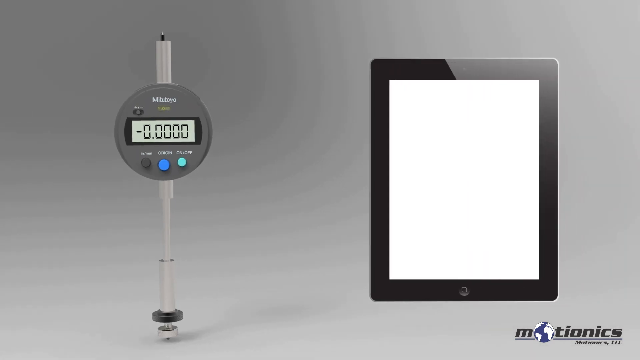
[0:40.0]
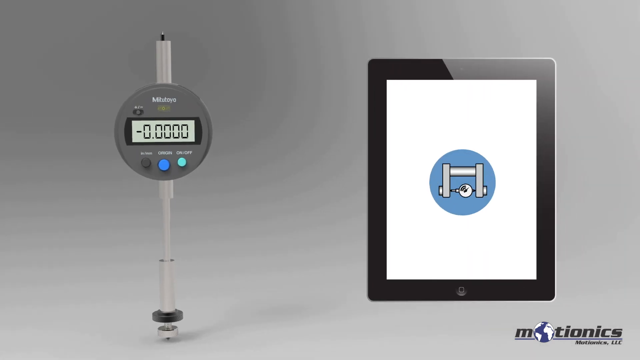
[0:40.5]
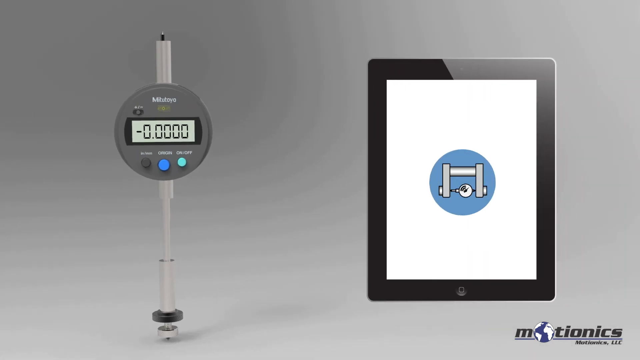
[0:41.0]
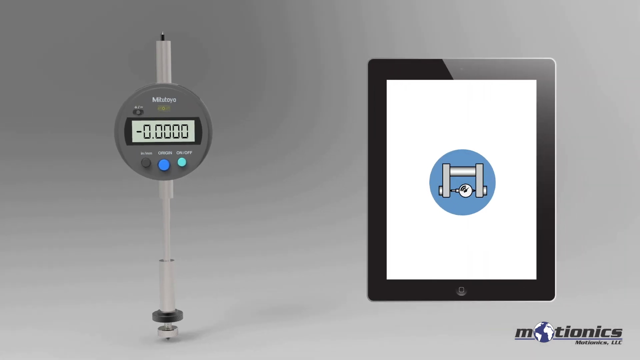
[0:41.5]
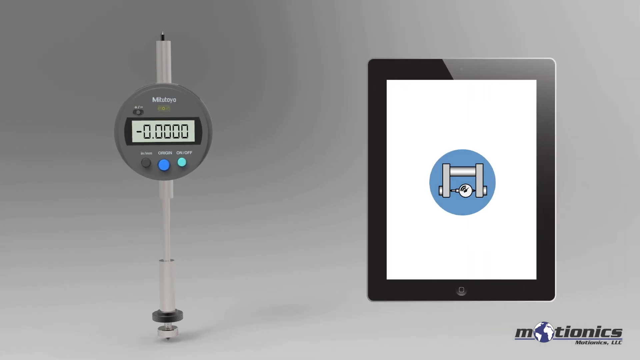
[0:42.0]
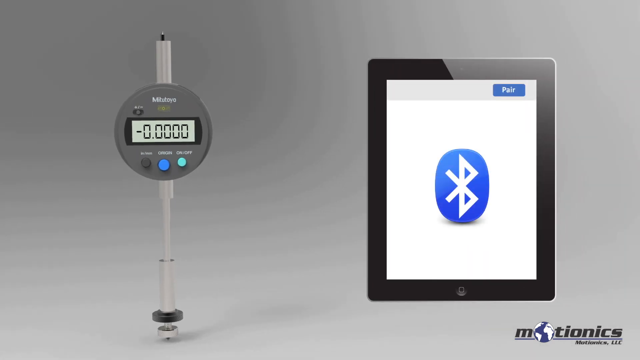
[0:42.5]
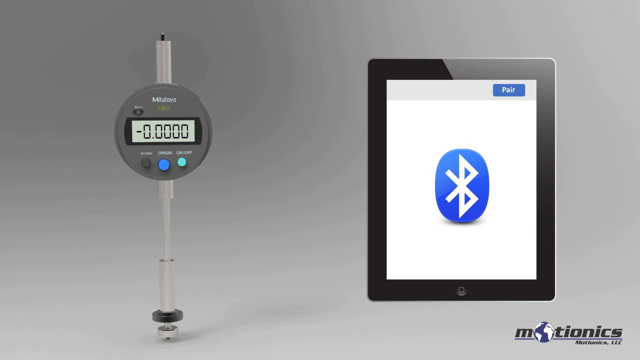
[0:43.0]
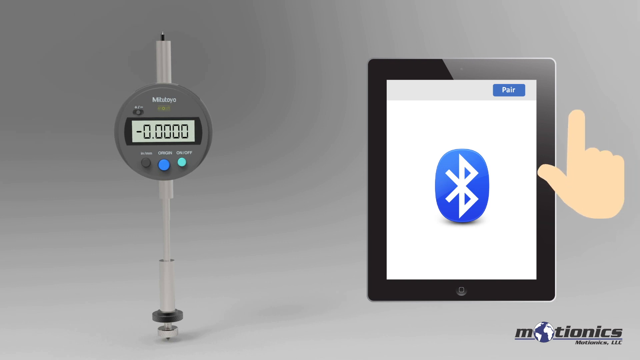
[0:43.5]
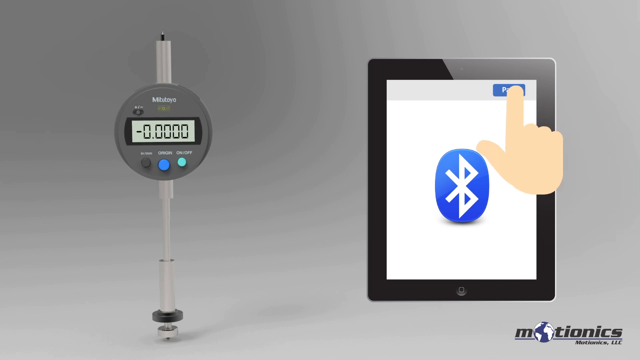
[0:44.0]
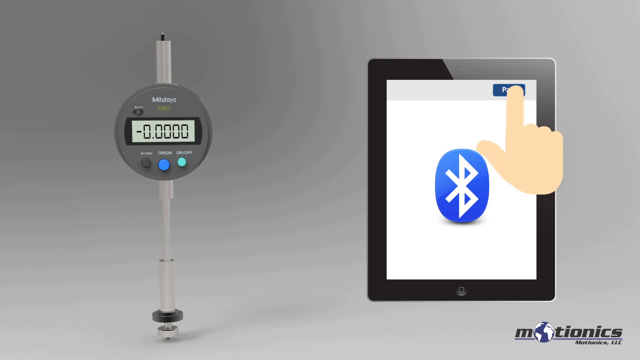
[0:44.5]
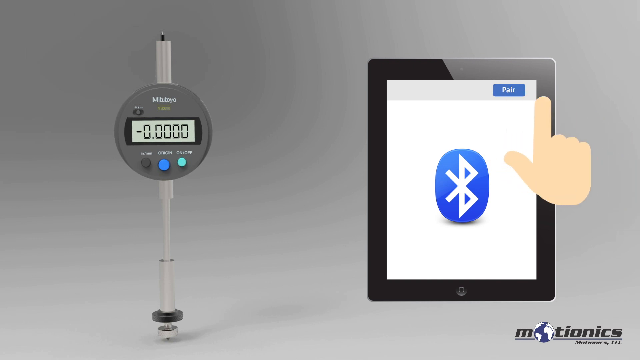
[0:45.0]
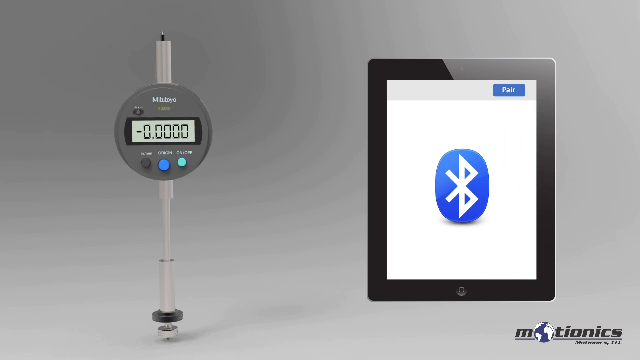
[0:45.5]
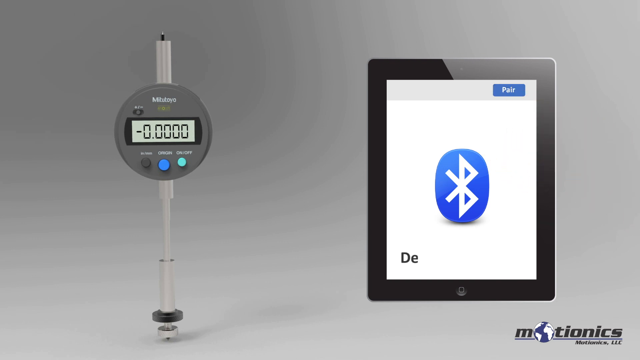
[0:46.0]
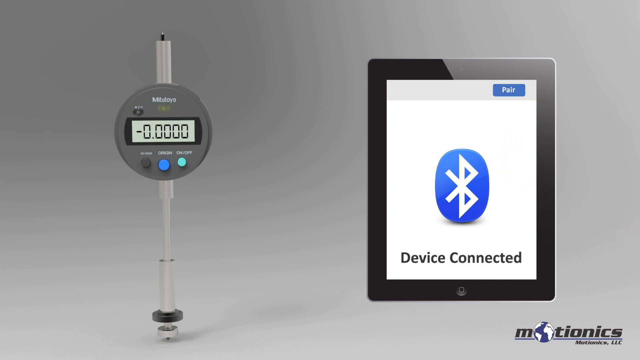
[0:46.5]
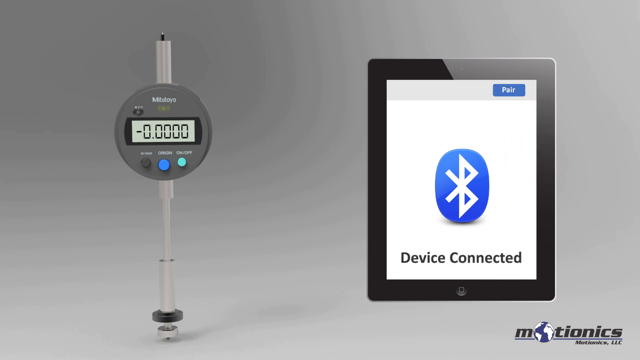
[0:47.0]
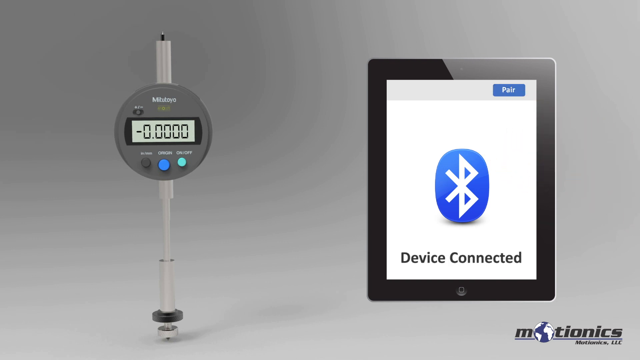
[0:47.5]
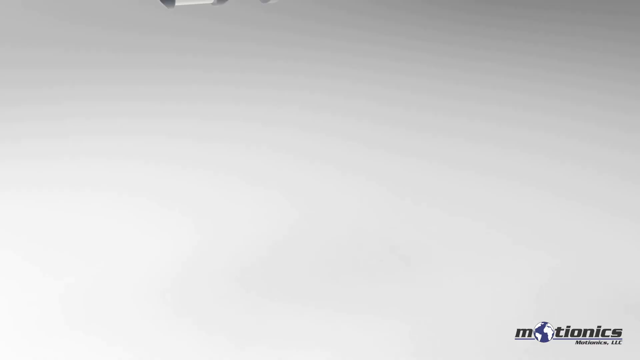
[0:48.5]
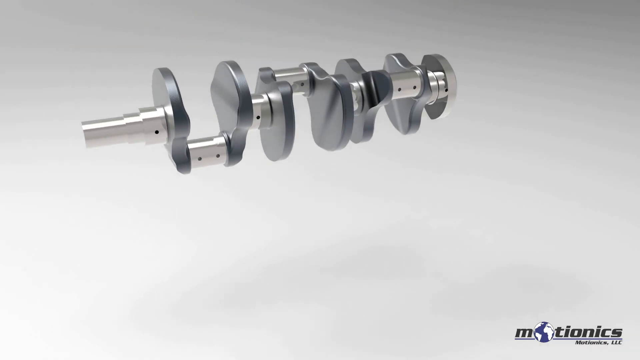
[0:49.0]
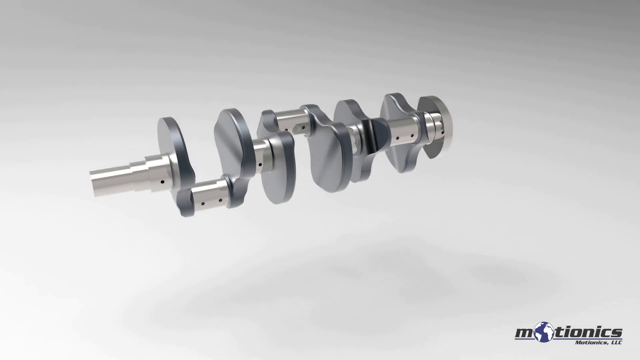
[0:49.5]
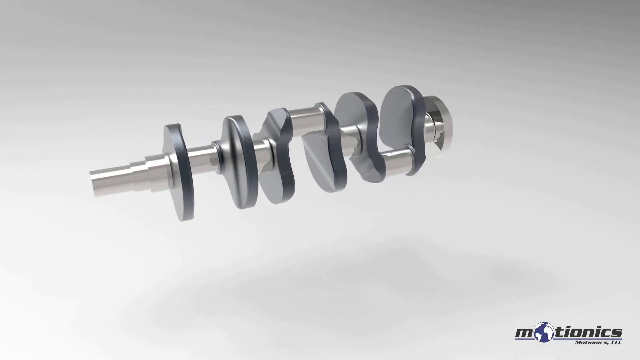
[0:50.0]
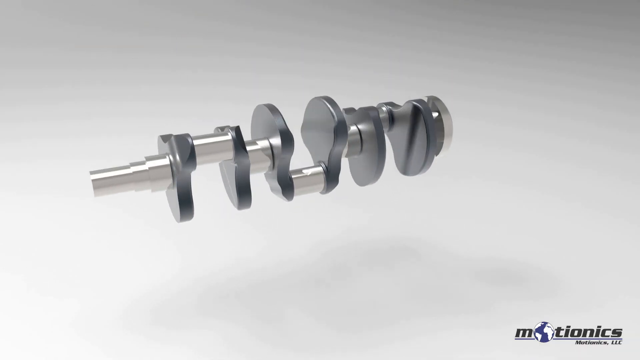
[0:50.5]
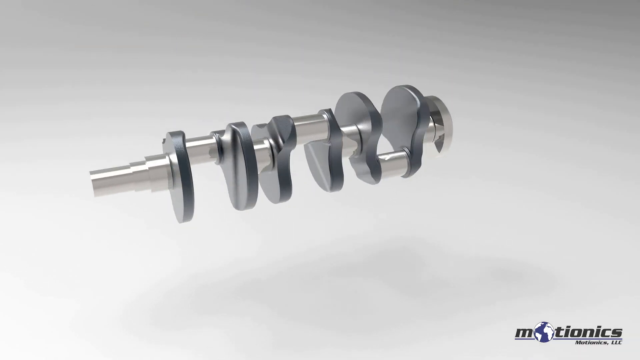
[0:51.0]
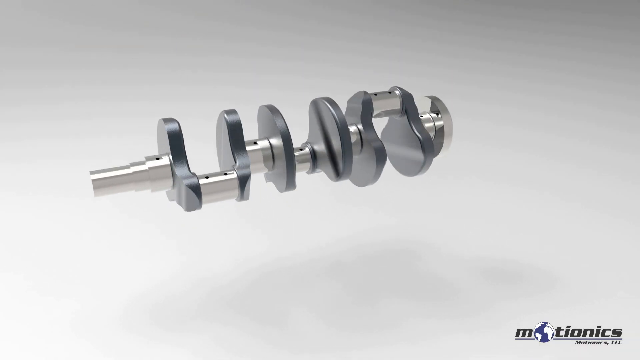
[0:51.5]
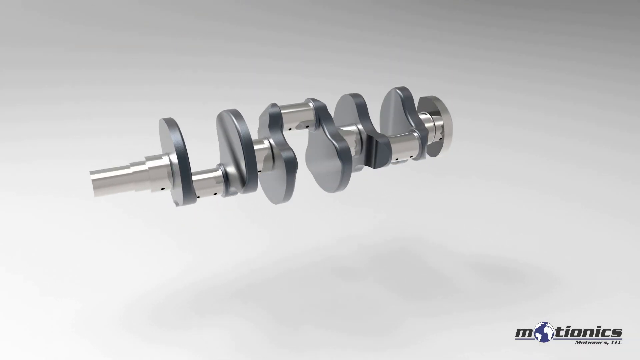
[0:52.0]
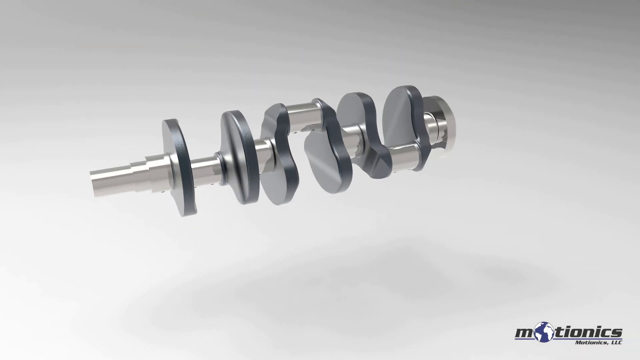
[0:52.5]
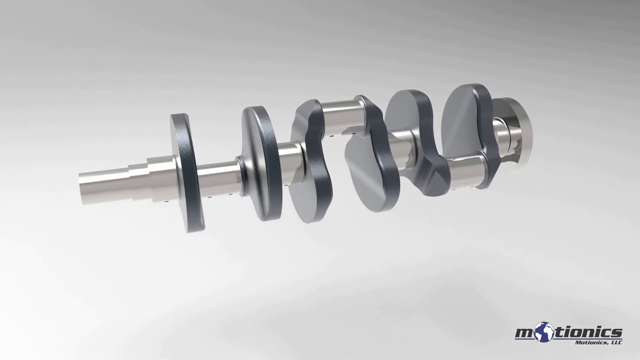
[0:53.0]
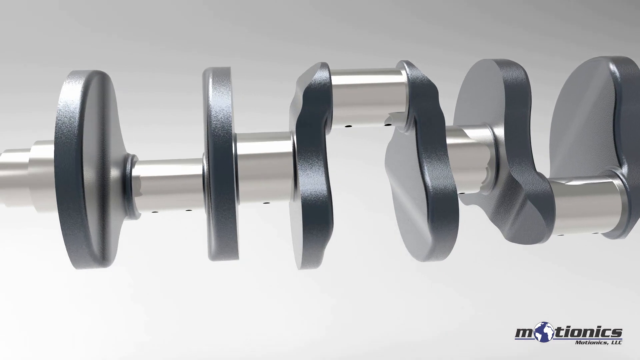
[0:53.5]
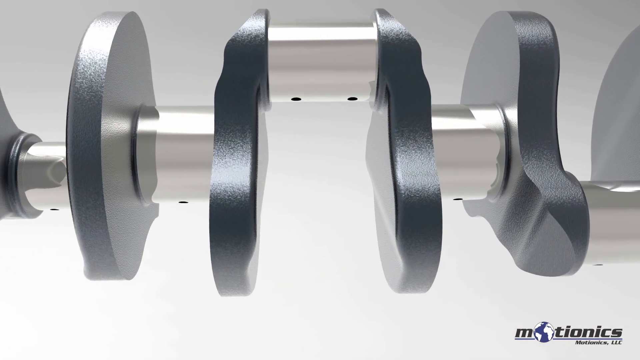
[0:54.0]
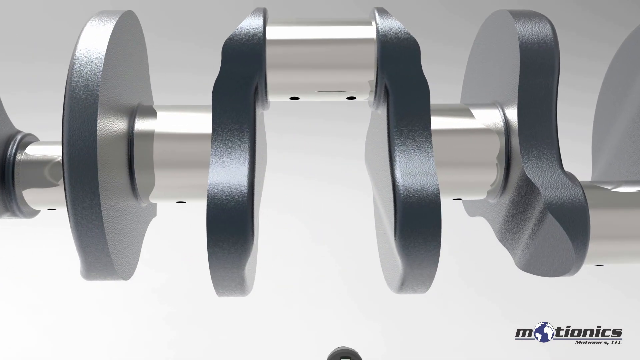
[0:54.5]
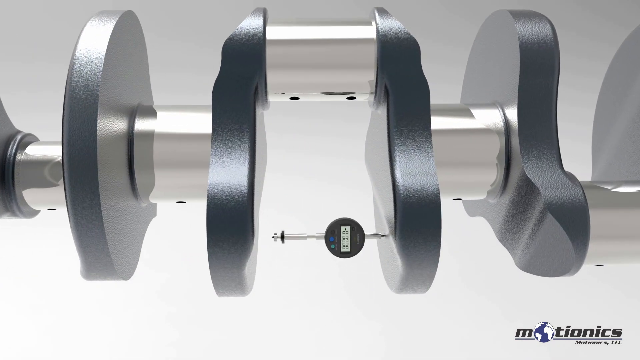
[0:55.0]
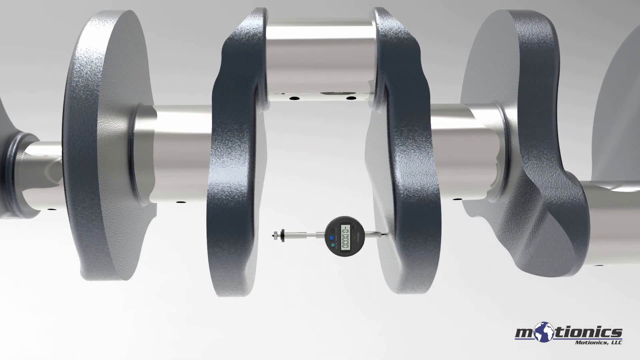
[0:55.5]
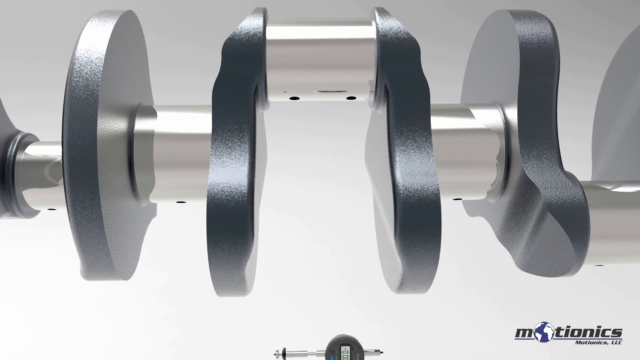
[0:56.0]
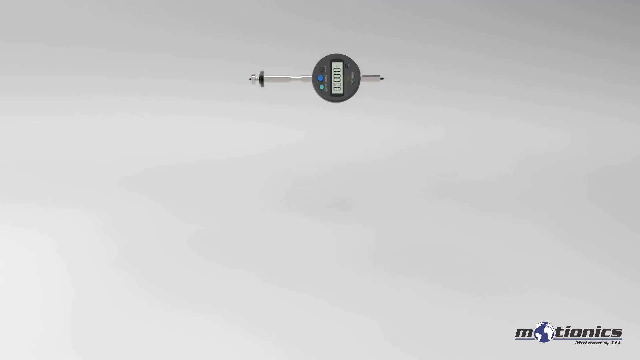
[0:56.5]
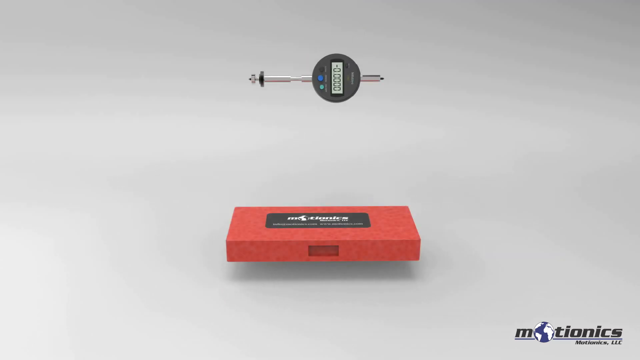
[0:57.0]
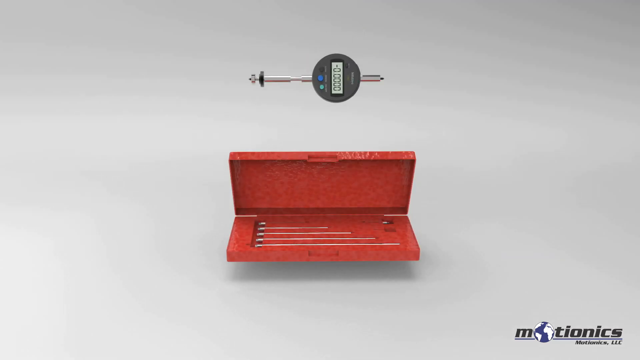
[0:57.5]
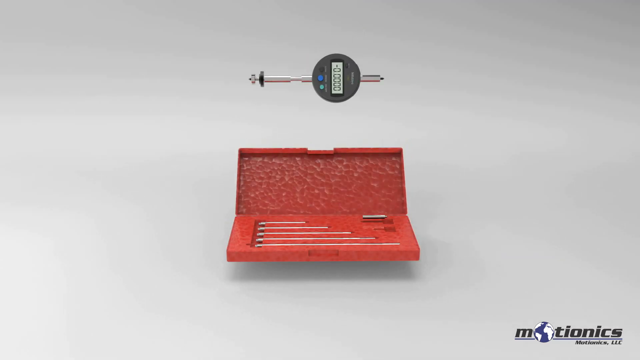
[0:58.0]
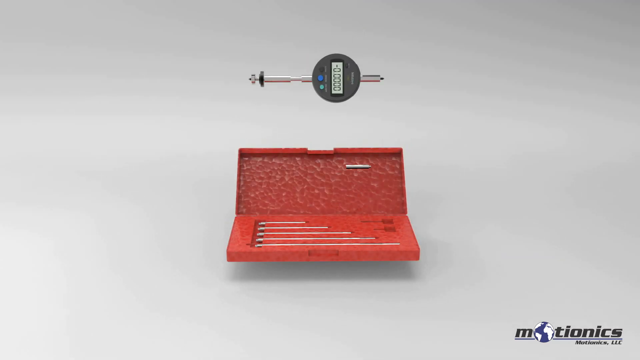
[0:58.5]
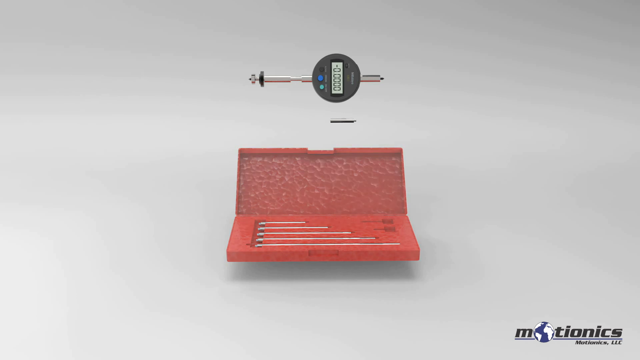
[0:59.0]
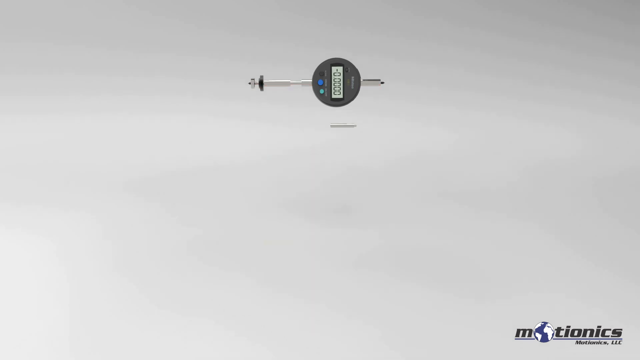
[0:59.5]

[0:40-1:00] On the picture of the tablet, a blue circle begins in the middle and grows. Inside it is a picture of a silver device with two lines on the right and left, a bar going across, and a circle toward the bottom, looking like it is screwed in on the sides. That disappears, and a Bluetooth logo appears on the tablet with "Pair" on top. A cartoon hand appears from the right side of the screen and slides over to press the Pair button with its finger out. At the bottom of the tablet, "Device Connected" appears, the letters appearing from left to right. The scene changes to a long silver device coming down from the top to the middle. It is cylindrical overall, with two sort of paddles in the middle: a small silver part on the left, then a bigger flat round part, a short silver part, and a series of alternating flat gray parts and small silver parts, including a small thicker gray part, ending with a circular cap that looks like something that spins. The animation shows it spinning up and down, with the sides staying in place. The camera zooms in to the middle, and a small picture of the electronic device slides to the middle and then on its own to the top of the empty screen. Below it the red-orange rectangular box appears and opens, a small bit from its right side goes up toward the electronic device, and the box disappears.